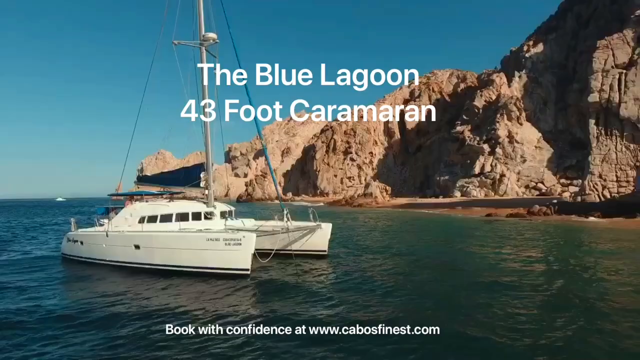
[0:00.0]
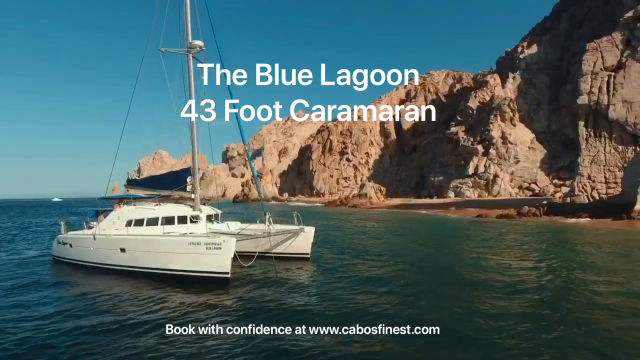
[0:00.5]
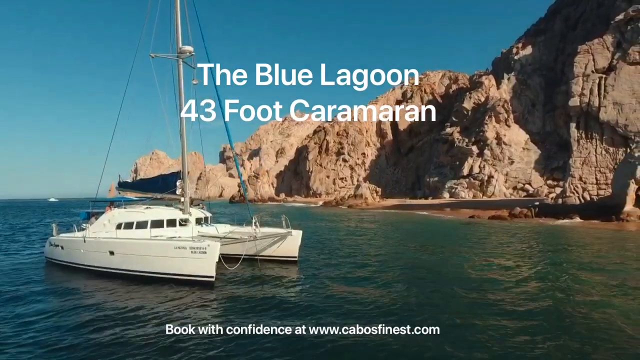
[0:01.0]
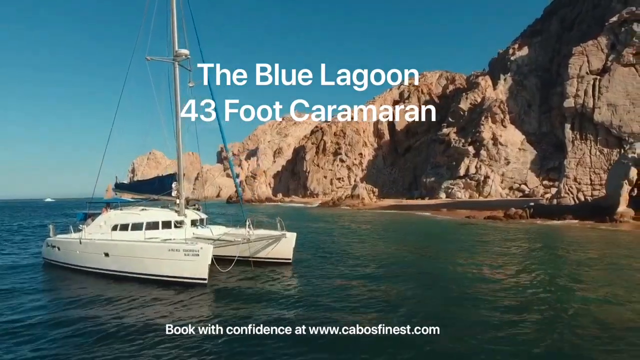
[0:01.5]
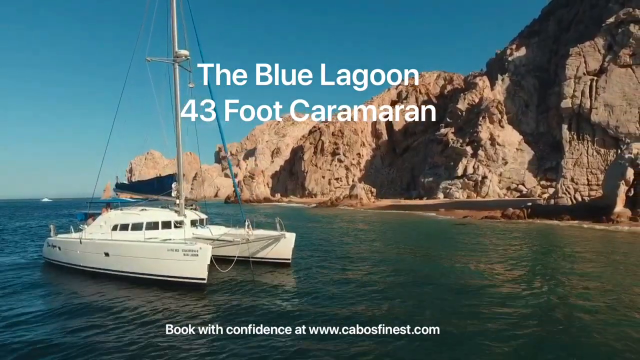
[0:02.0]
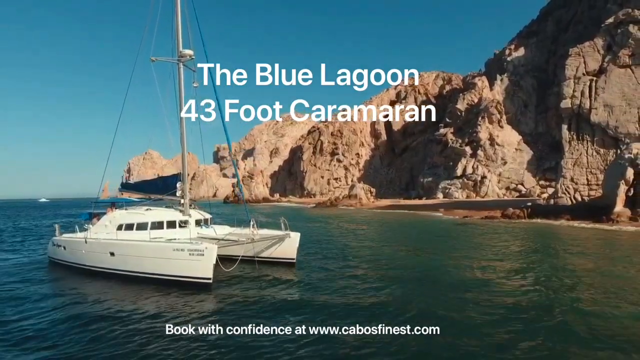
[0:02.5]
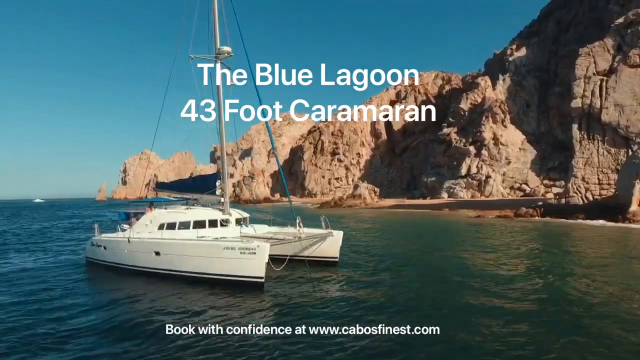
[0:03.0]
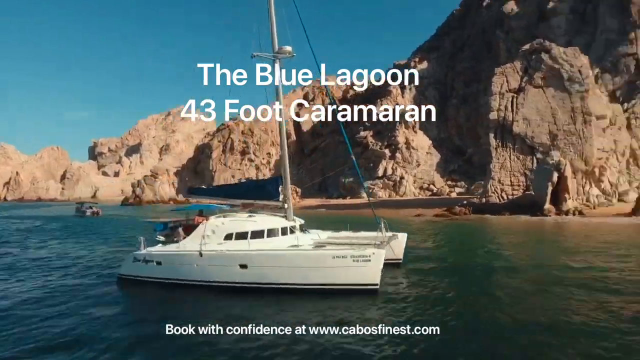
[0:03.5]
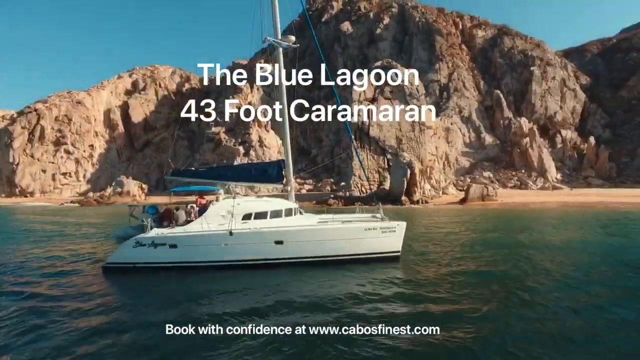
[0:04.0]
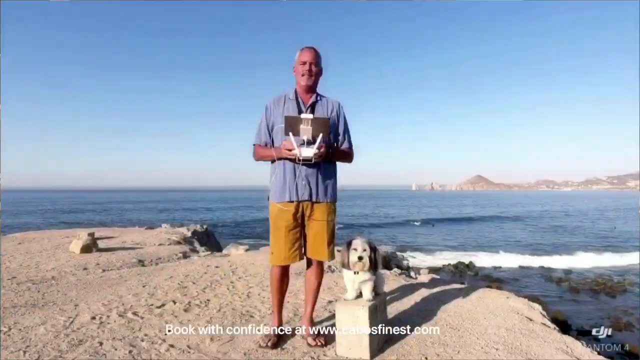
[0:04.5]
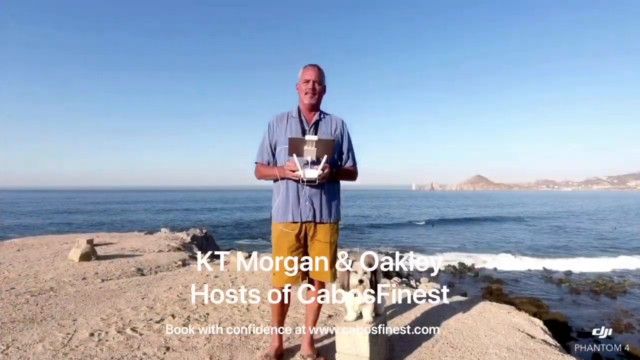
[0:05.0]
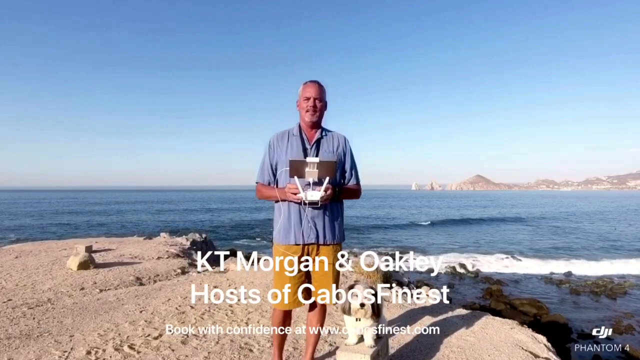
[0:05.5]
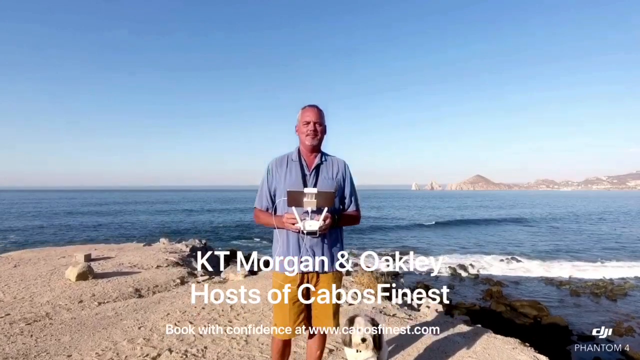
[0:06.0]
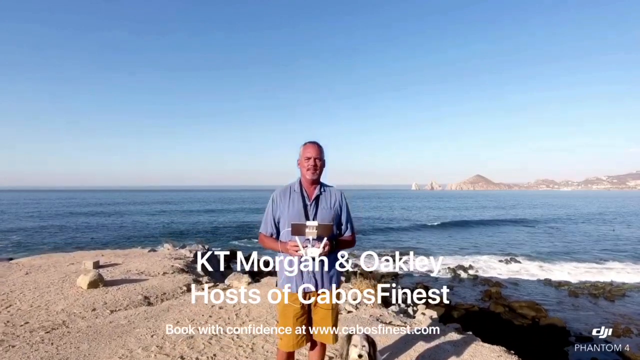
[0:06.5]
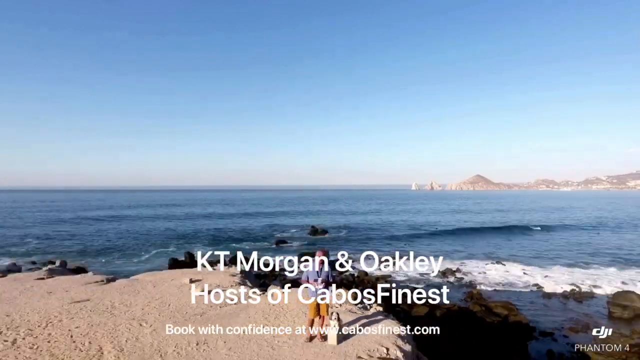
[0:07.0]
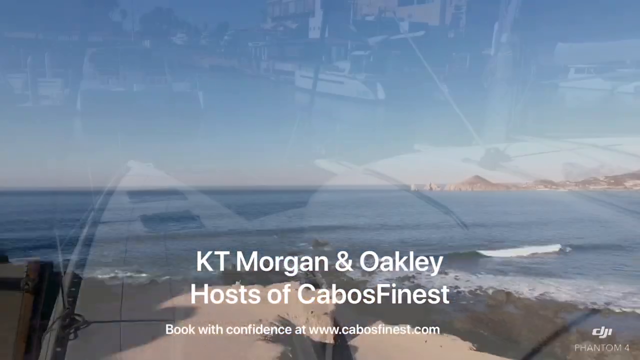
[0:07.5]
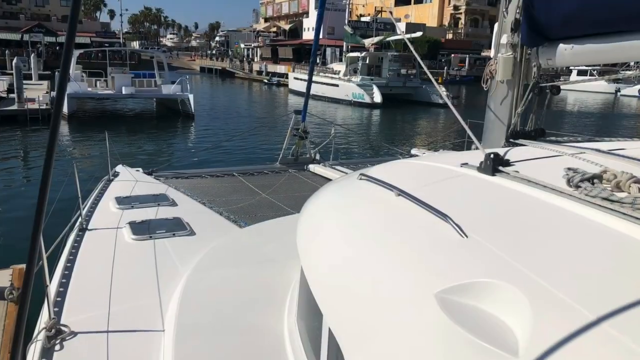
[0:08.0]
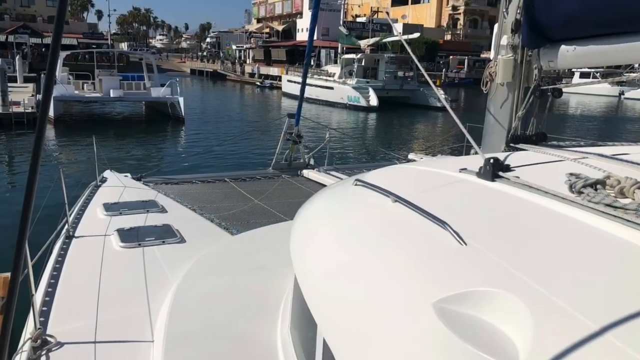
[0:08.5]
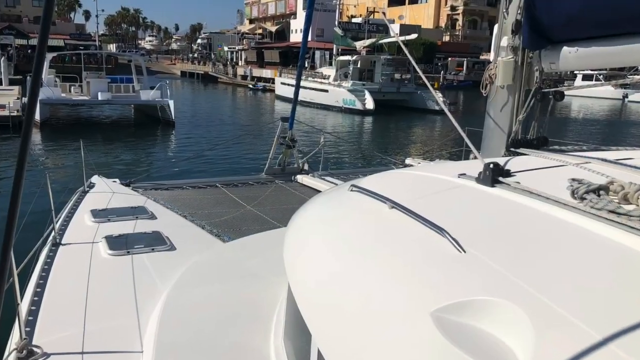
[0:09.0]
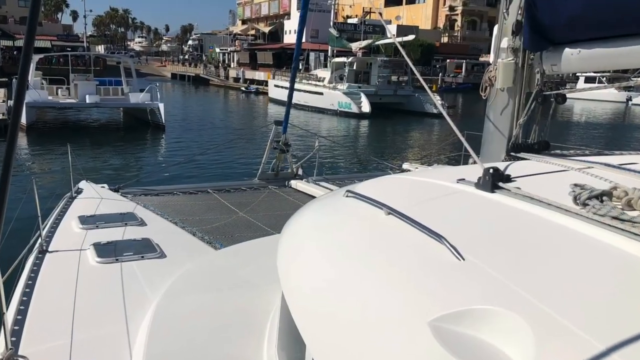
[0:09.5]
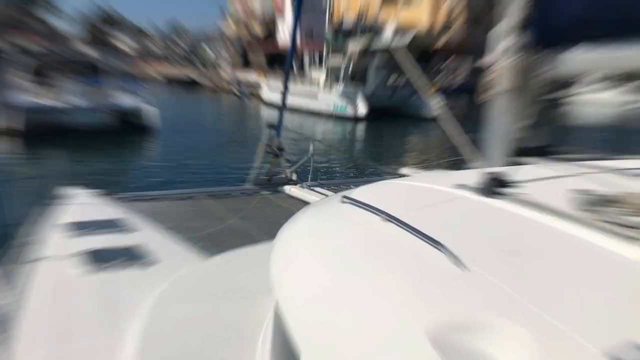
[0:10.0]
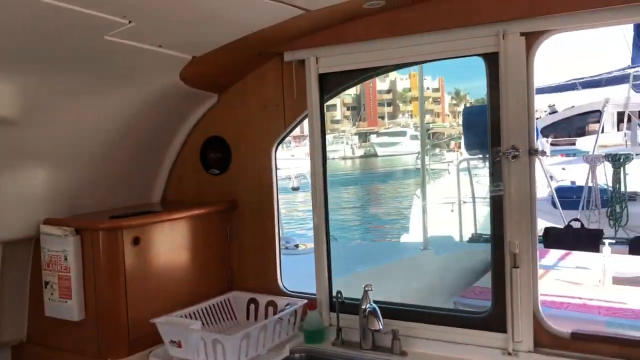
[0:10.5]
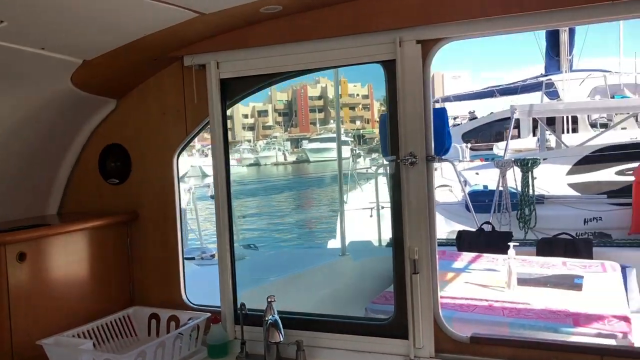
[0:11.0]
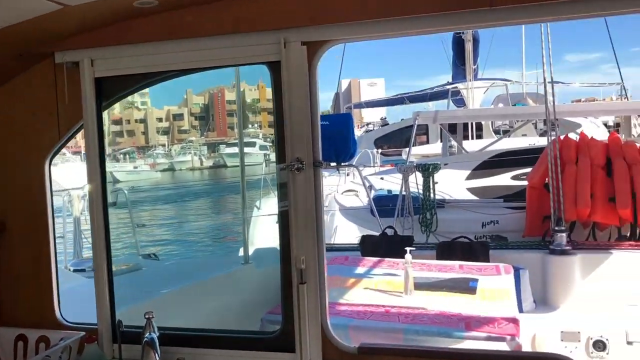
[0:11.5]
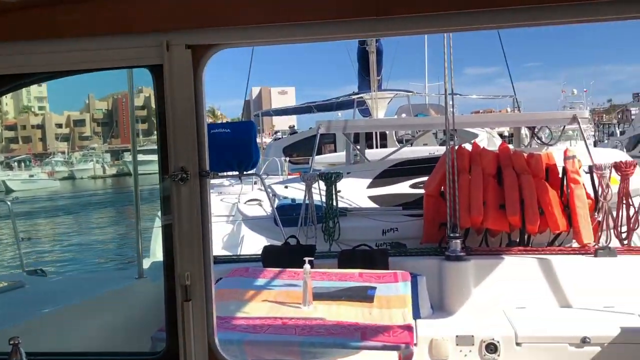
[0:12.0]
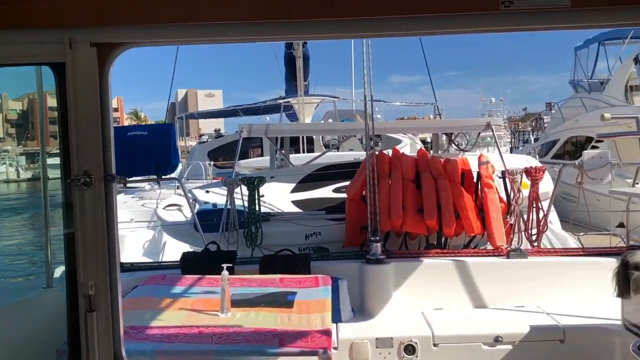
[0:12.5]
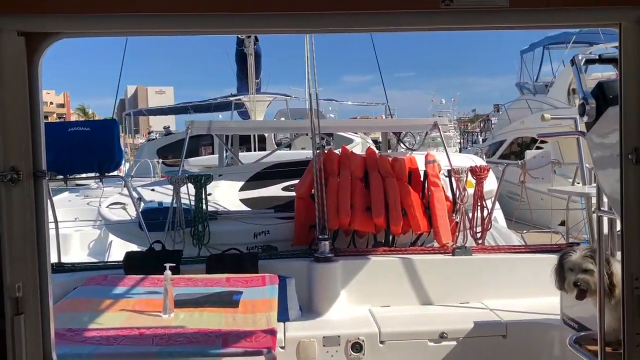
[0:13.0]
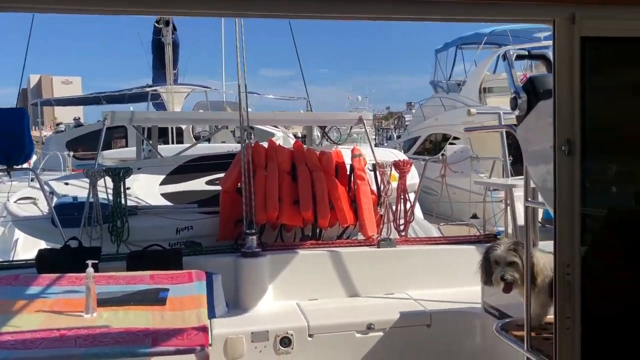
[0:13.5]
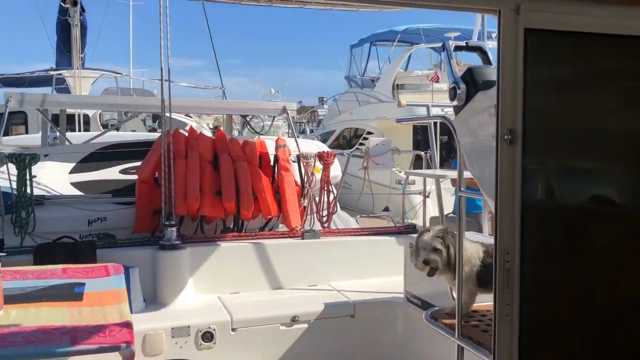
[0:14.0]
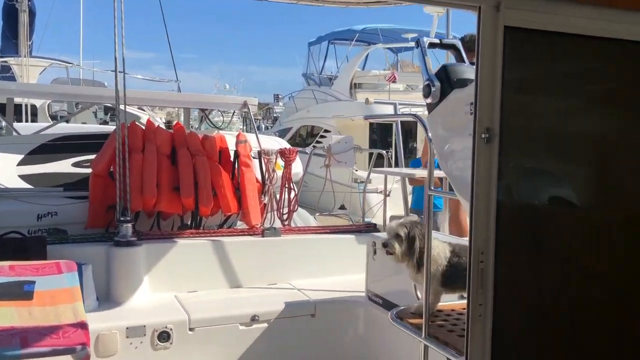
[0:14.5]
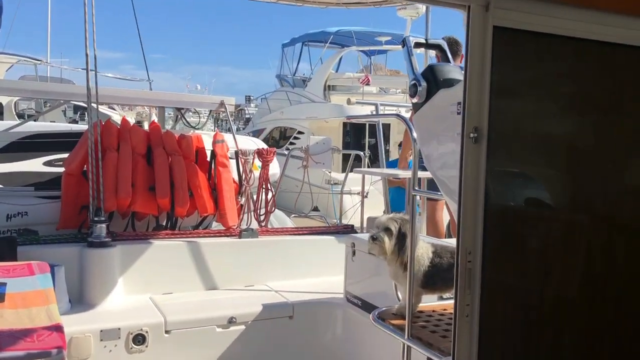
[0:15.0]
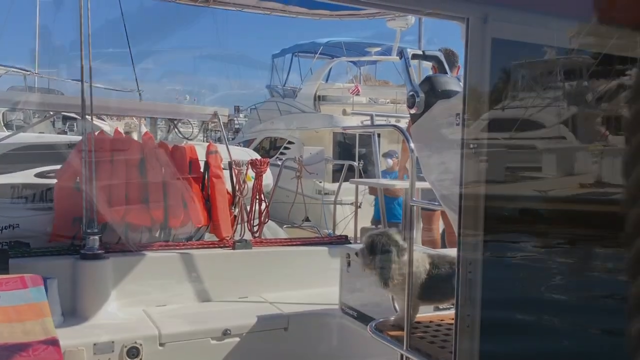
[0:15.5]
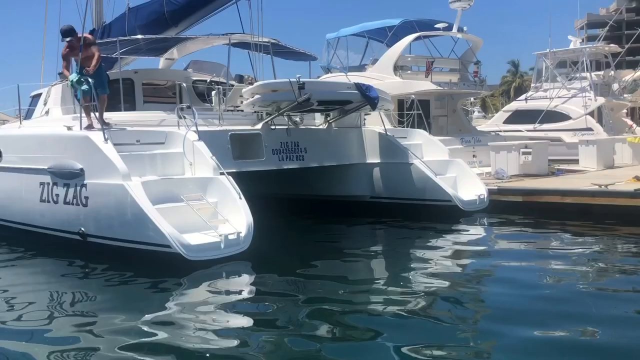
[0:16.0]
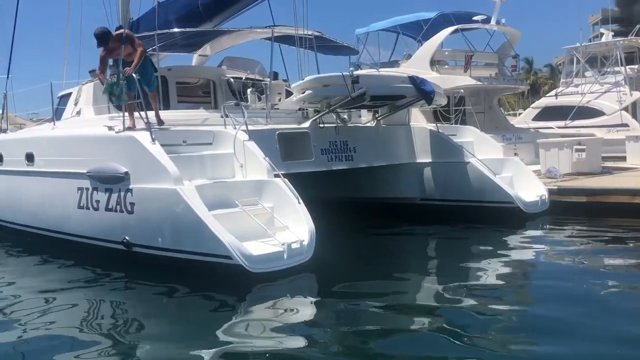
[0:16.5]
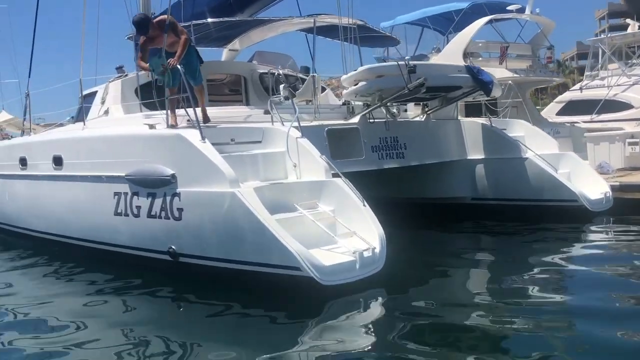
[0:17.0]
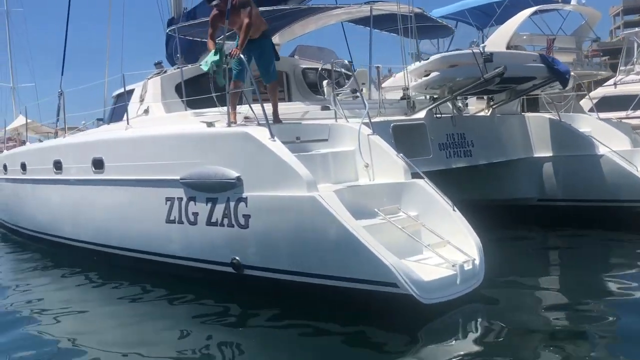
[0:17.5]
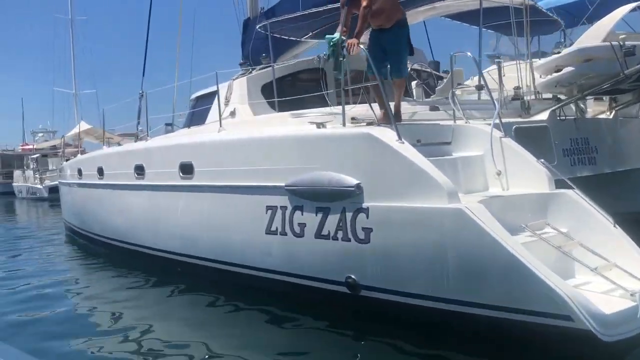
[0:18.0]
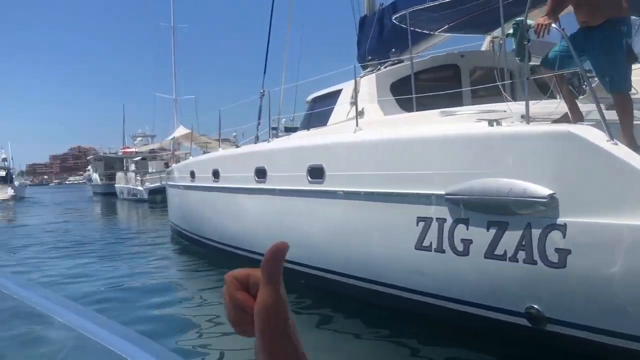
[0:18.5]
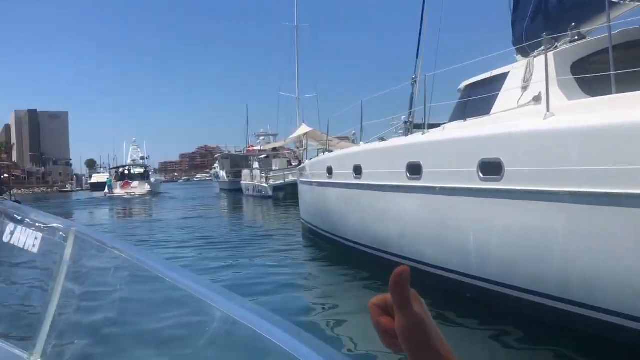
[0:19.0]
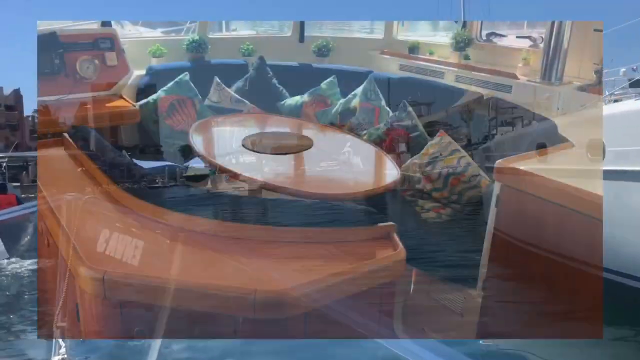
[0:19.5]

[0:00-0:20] A small white boat floats in an area surrounded by mountains, and above it text reads "the Blue Lagoon, 43 foot". The video cuts to a man speaking directly to the camera. He holds a remote in his hands that looks like it is for a drone, and he speaks directly to a drone. Along the bottom of the screen, text reads "KT Morgan and Oakley hosts of Cabo's finest". He stands on a small dirt platform, and in the background there is nothing but ocean as far as can be seen. The drone slowly pans out and quickly goes away. The video then moves to an up-close shot from inside a boat, filmed outward. A small white dog is on the deck, and a bunch of orange life jackets hang up. The camera pans from left to right as the boat passes other boats, including a white boat with the word "zigzag" painted on its outside in blue.